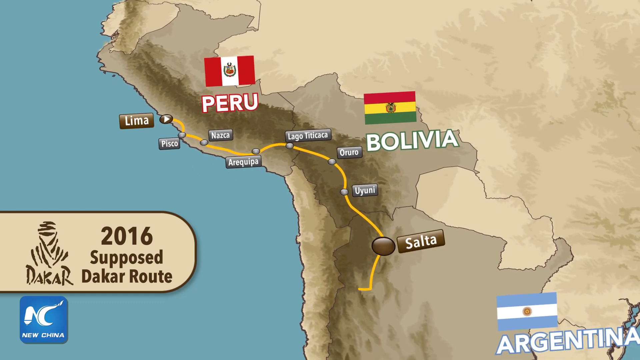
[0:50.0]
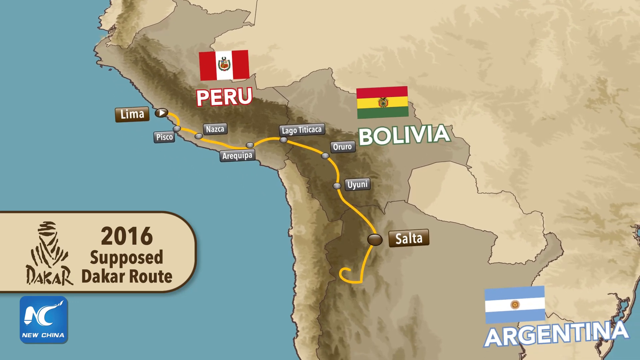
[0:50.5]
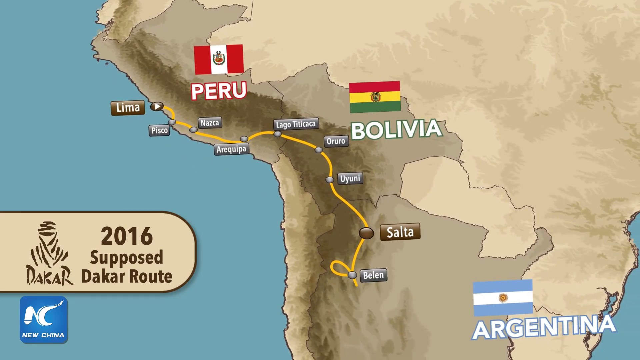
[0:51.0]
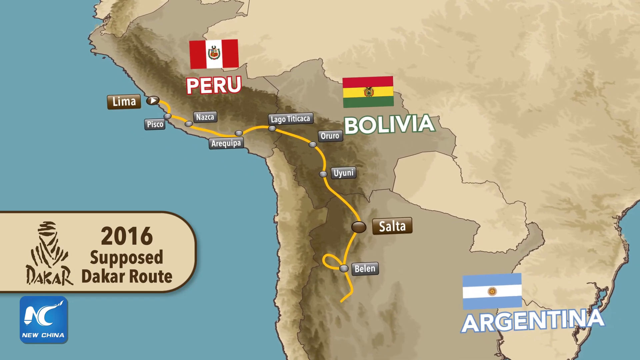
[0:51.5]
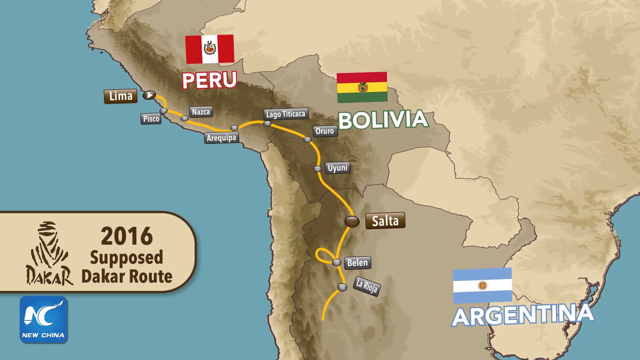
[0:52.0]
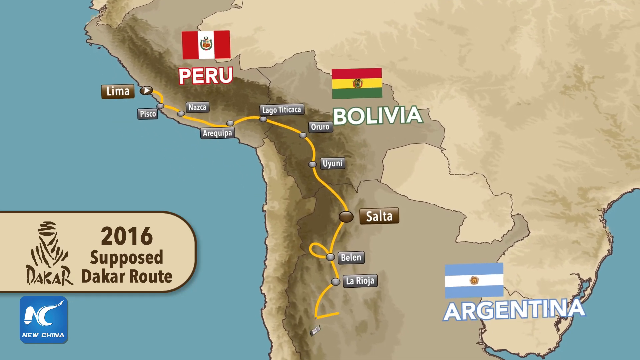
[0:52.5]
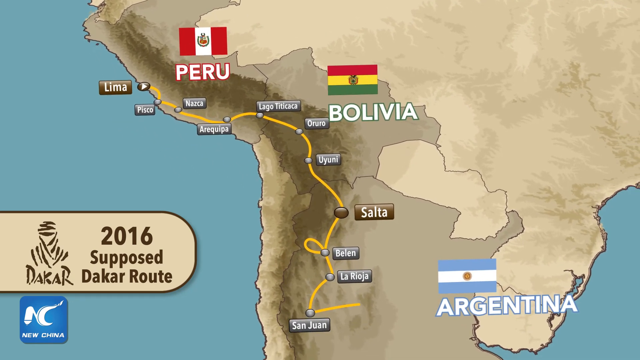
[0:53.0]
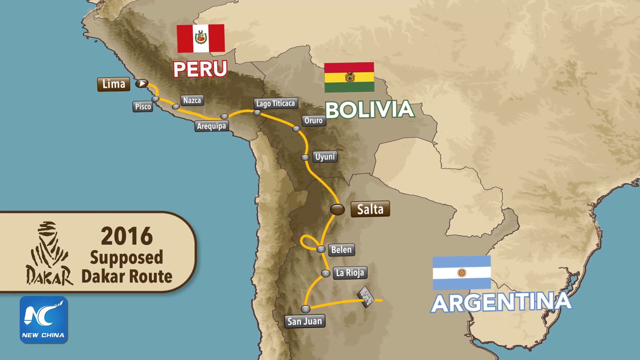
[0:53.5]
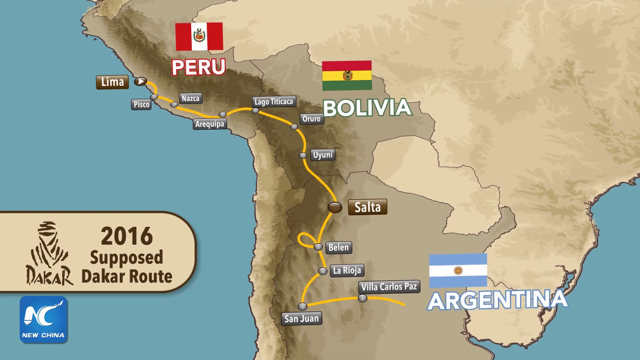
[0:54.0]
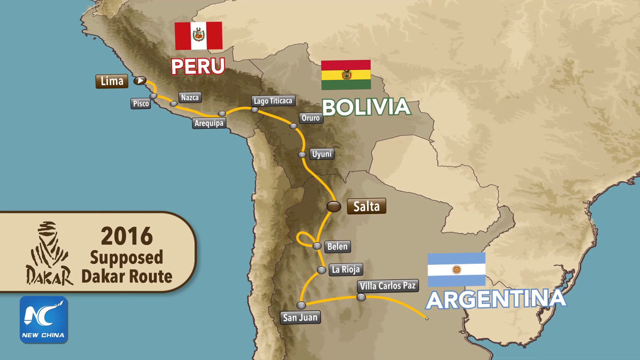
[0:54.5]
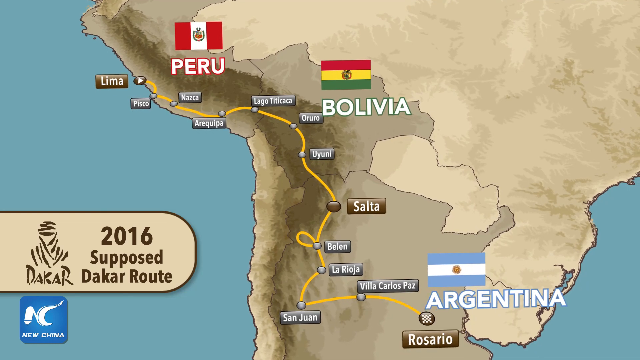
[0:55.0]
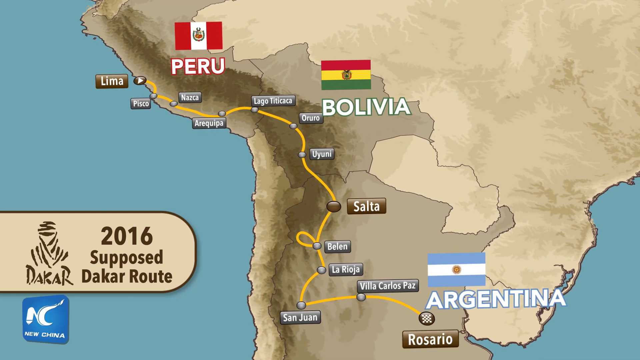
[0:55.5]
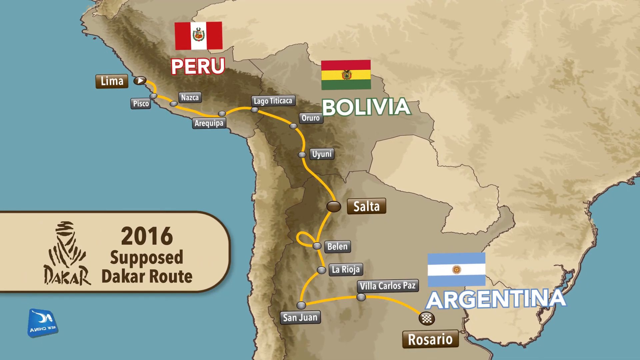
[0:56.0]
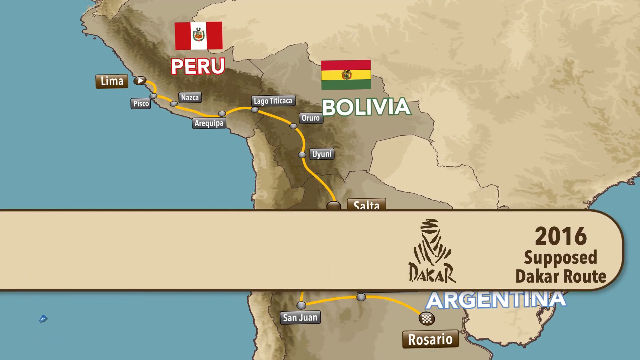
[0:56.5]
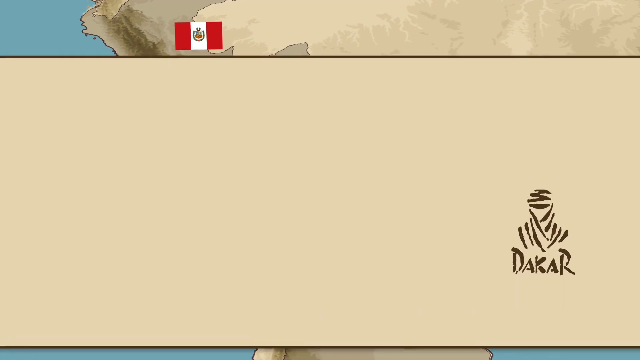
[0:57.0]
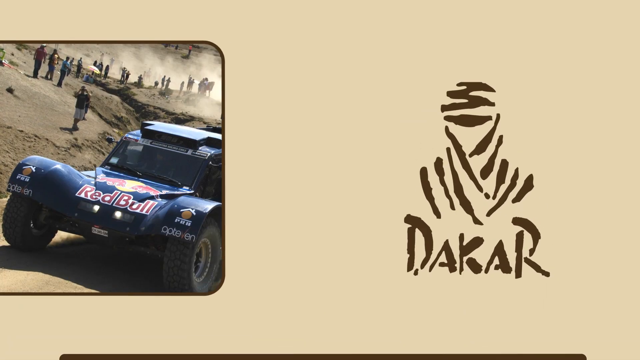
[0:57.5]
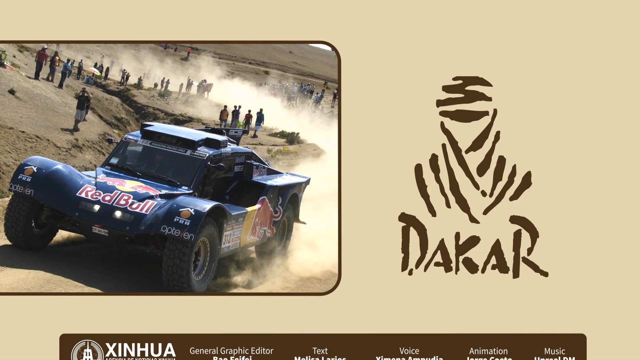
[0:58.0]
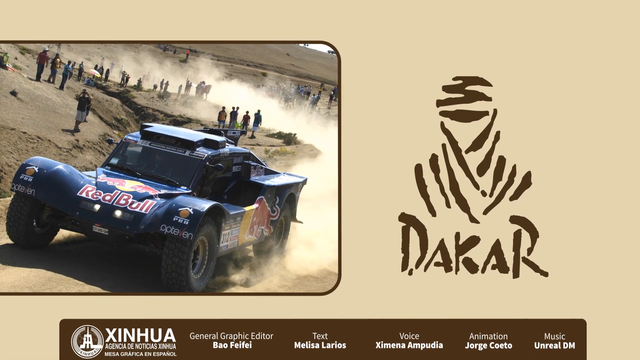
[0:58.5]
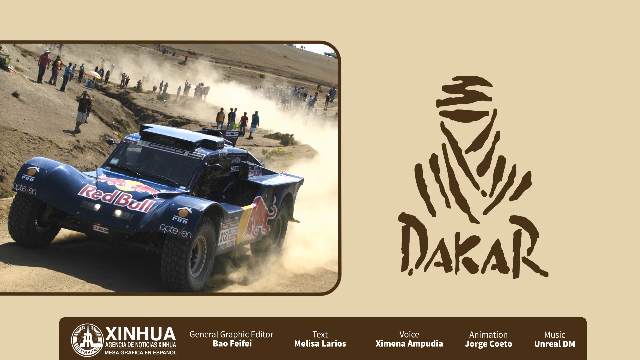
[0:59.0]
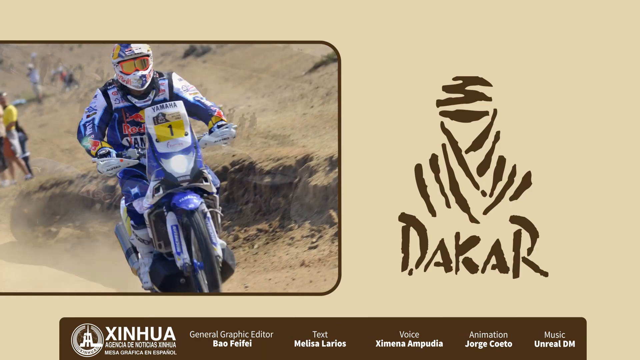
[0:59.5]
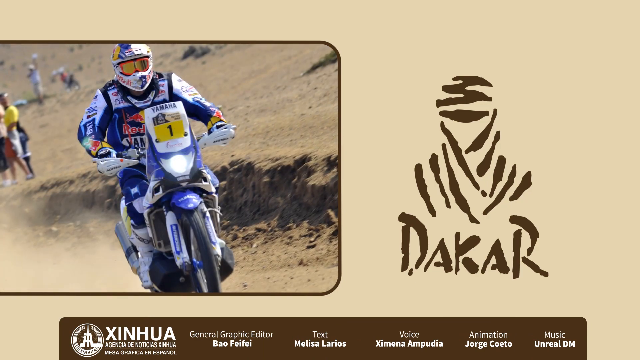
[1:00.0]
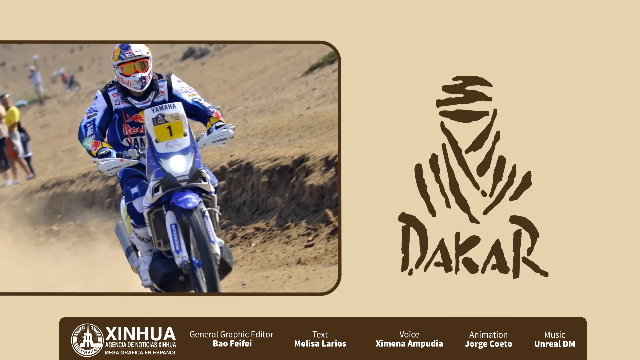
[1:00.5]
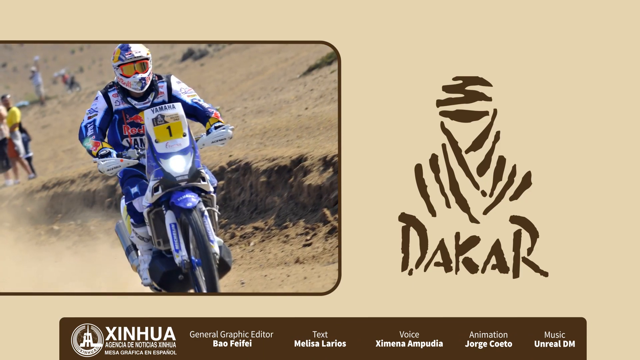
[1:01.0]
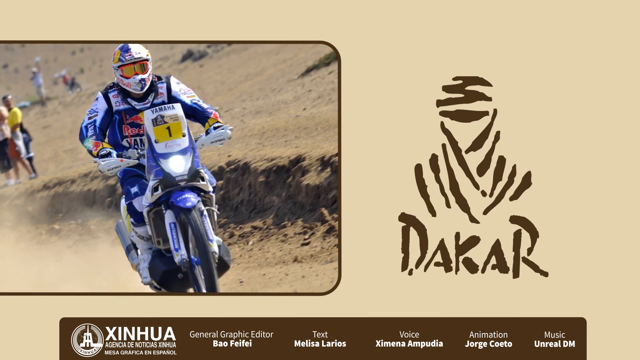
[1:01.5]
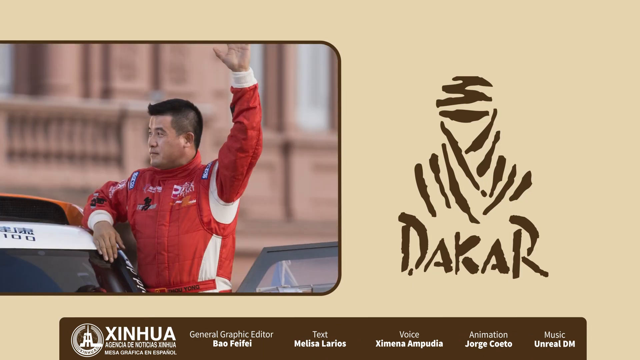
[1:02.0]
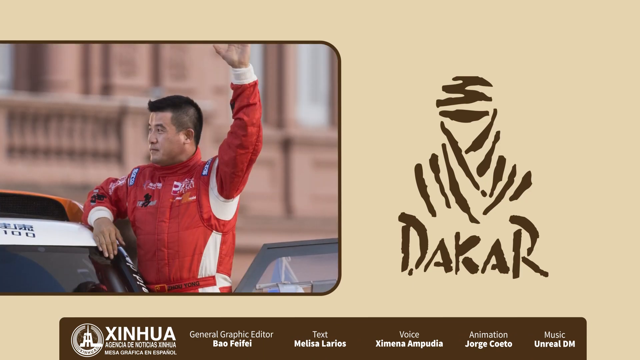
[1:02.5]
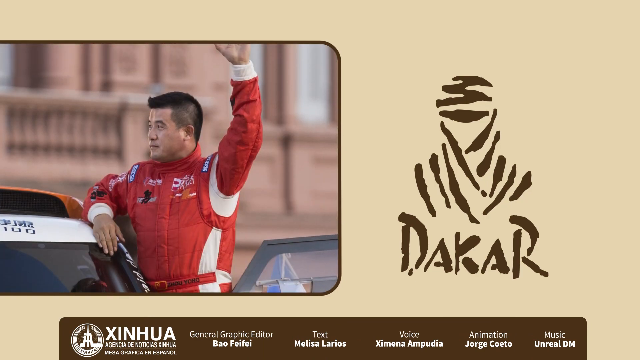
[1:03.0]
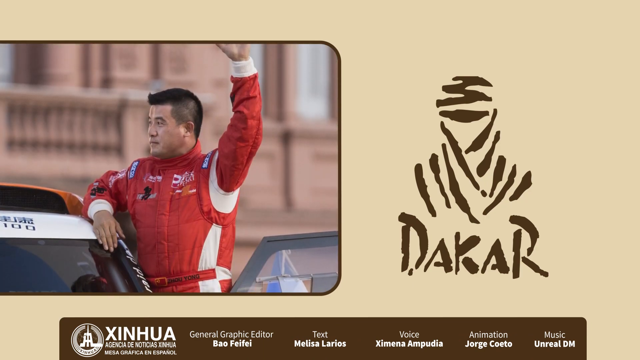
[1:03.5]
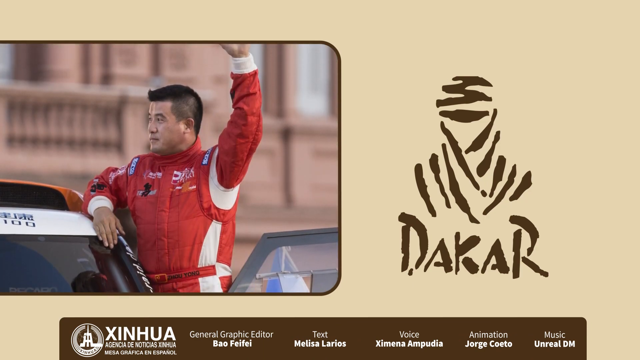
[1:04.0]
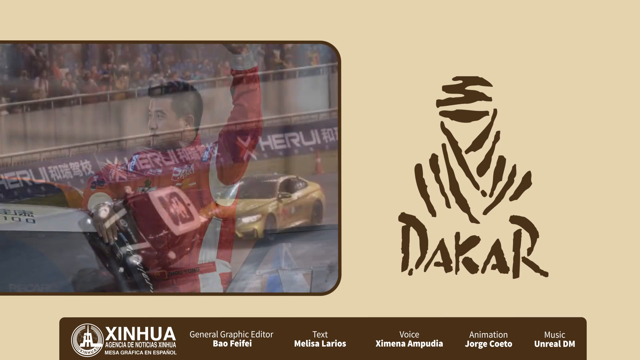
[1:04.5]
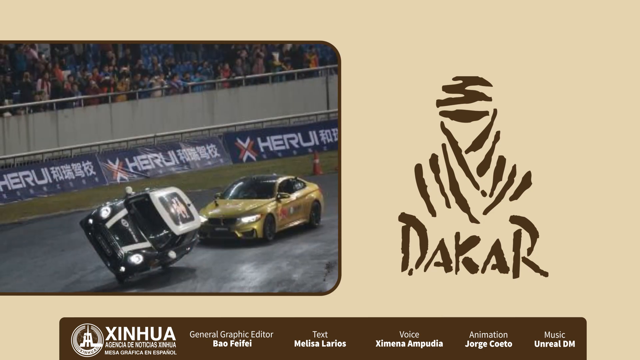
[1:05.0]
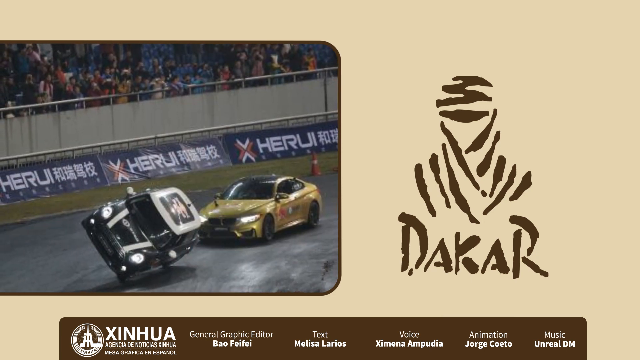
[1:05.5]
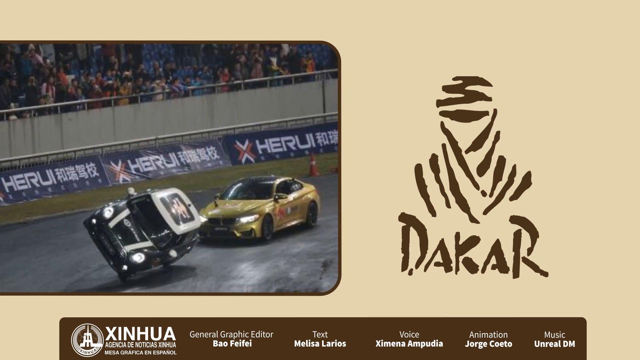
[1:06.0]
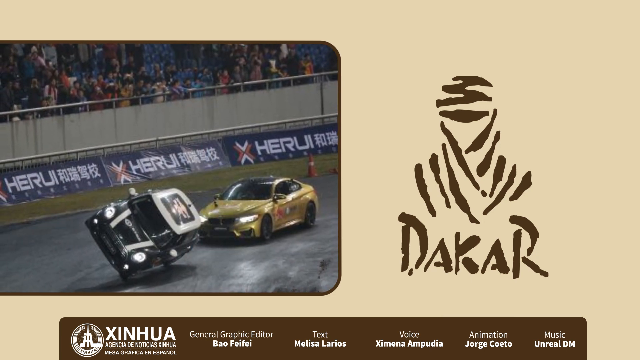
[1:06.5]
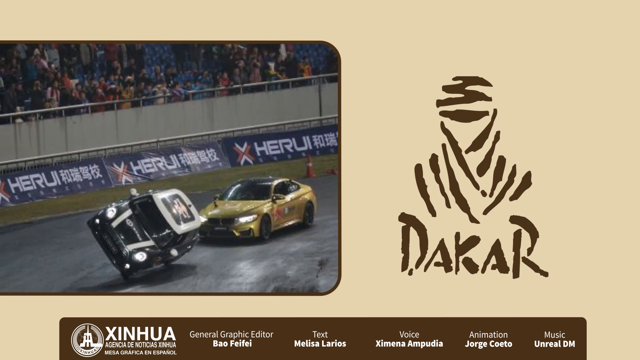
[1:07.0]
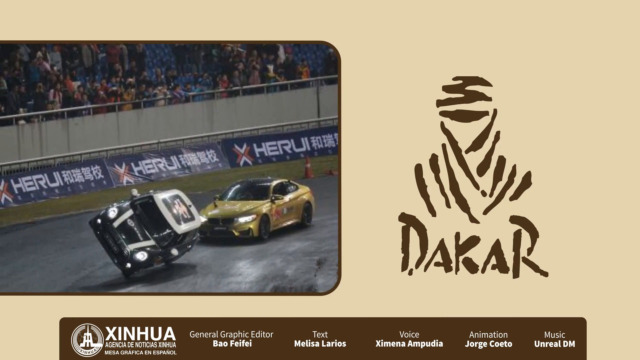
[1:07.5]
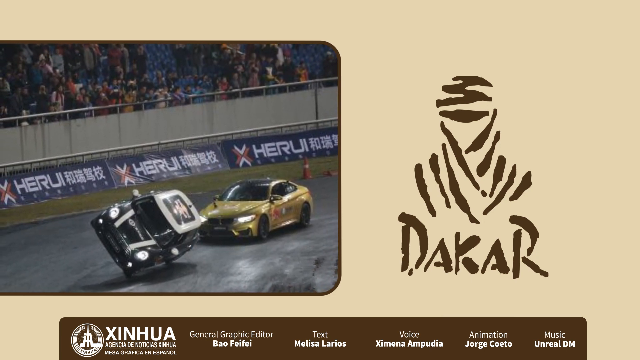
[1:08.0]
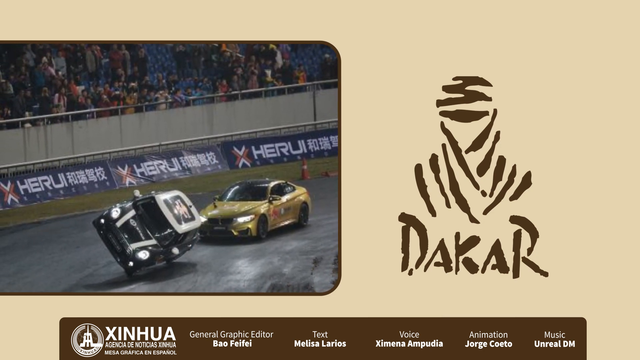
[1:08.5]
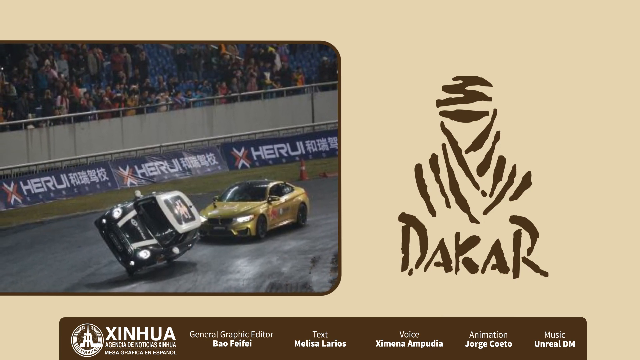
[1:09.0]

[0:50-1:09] The map shows Bolivia and Peru; Bolivia's flag is red, yellow and green, and Peru's is red and white. A city pops up, along with Lima, and then Argentina with its white and blue flag. Text reads "2016 supposed Dakar route". A yellow line comes down the map, and small cities pop up as it moves down to Argentina. Then "DARCAR" is shown, with a race car on the left side that says "Red Bull", one of the sponsors. Some people are on a motorcycle, someone wears a blue and white outfit, and an Asian-looking man wears a red and white racing suit. White lettering at the bottom reads "XINHUA". One car is on two wheels.